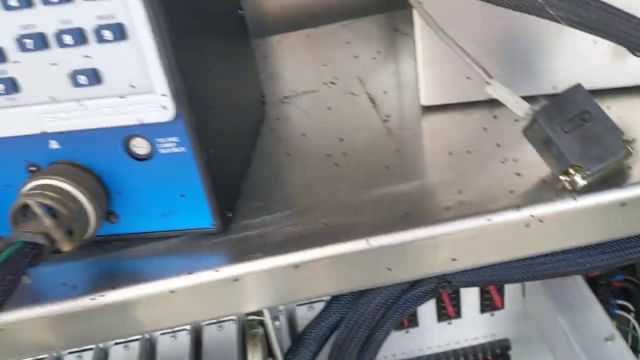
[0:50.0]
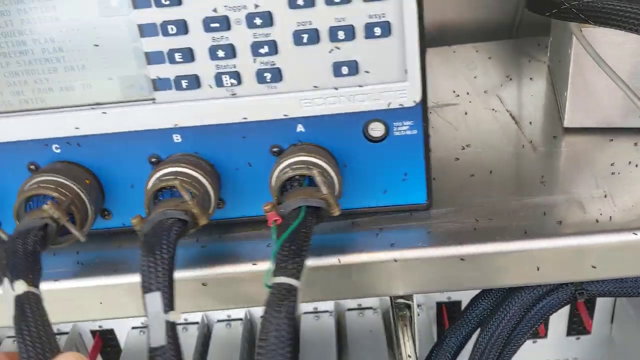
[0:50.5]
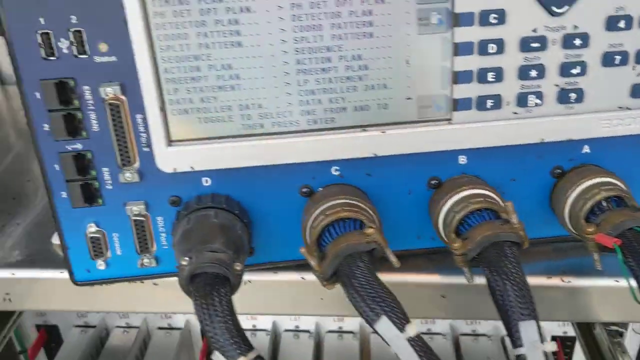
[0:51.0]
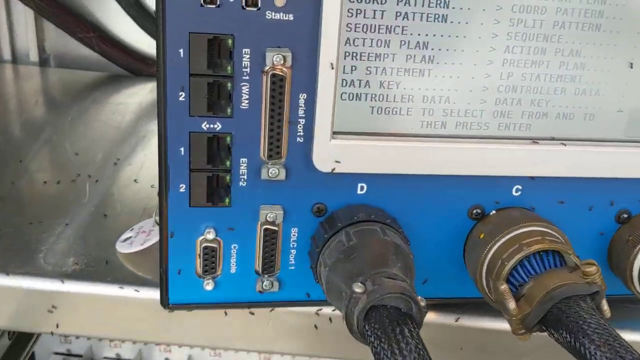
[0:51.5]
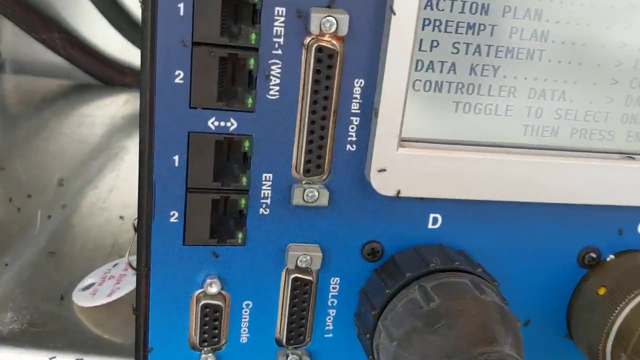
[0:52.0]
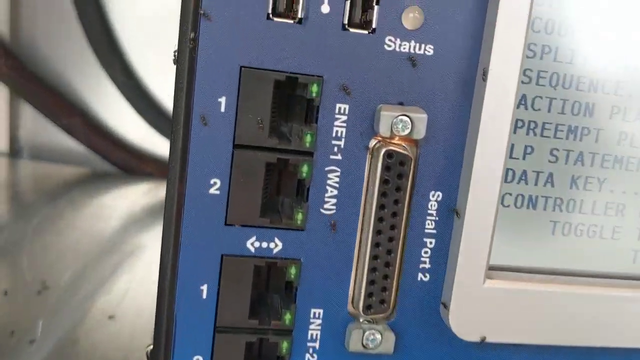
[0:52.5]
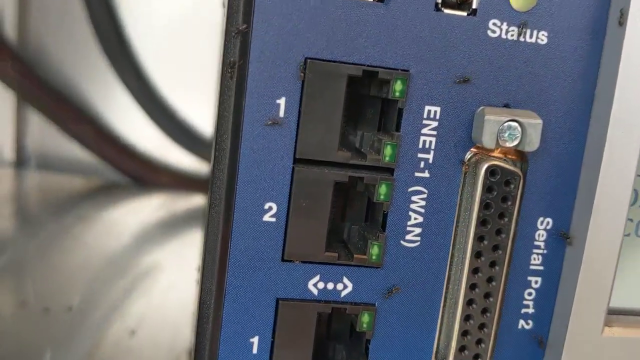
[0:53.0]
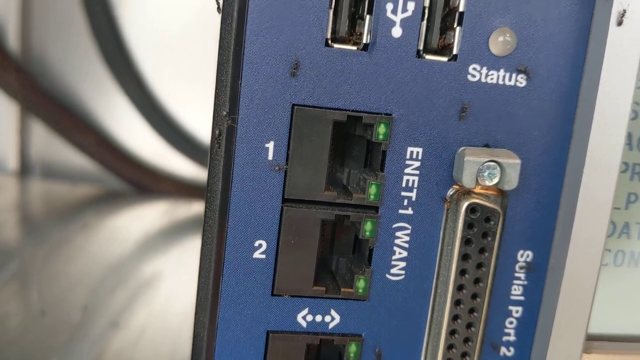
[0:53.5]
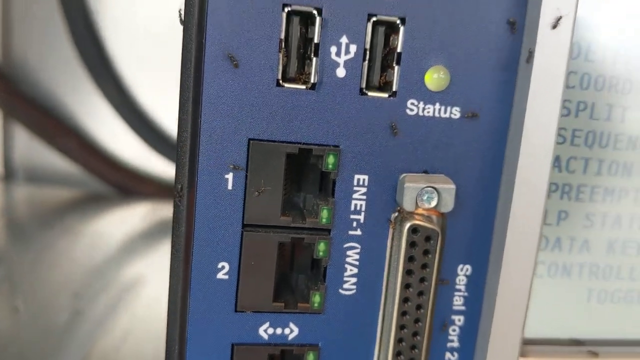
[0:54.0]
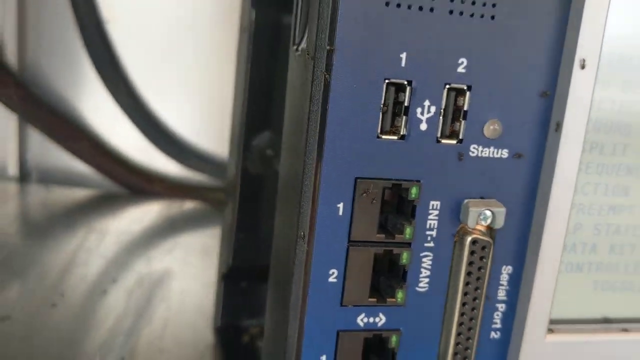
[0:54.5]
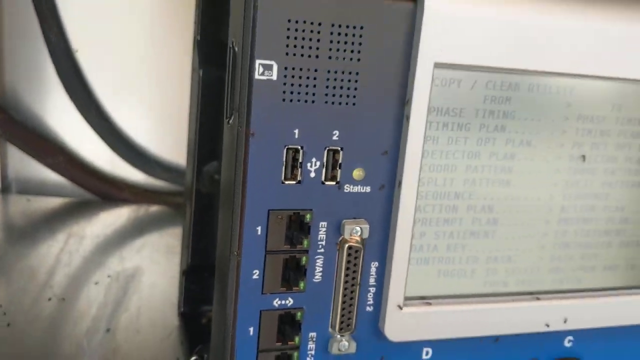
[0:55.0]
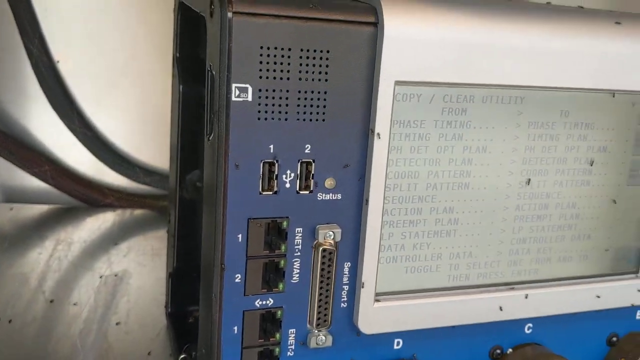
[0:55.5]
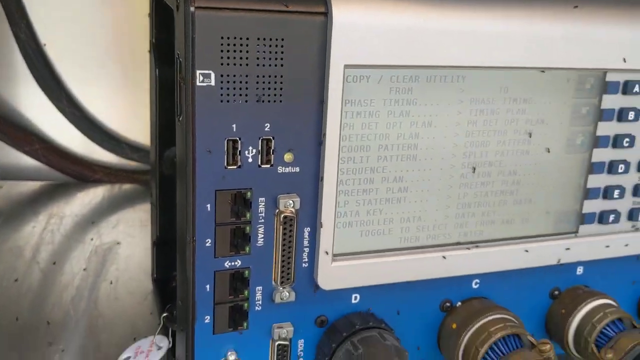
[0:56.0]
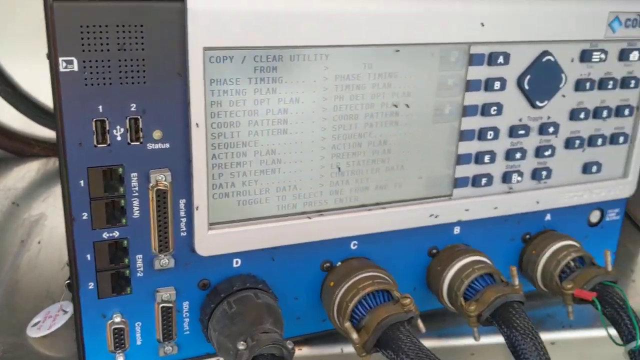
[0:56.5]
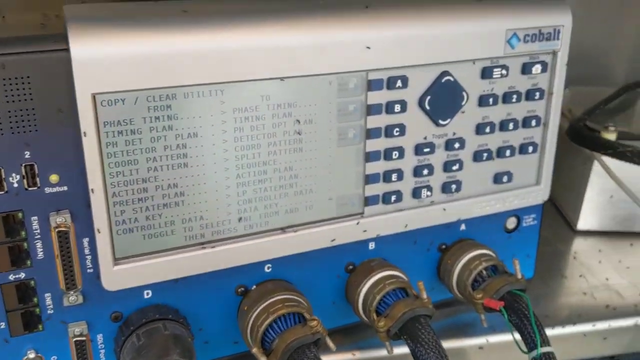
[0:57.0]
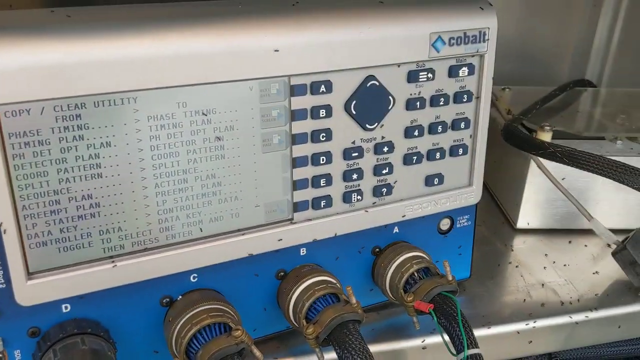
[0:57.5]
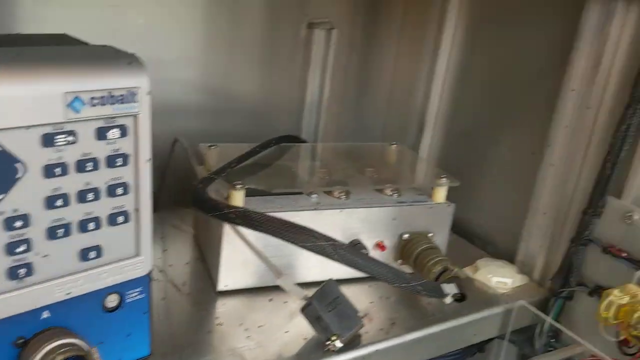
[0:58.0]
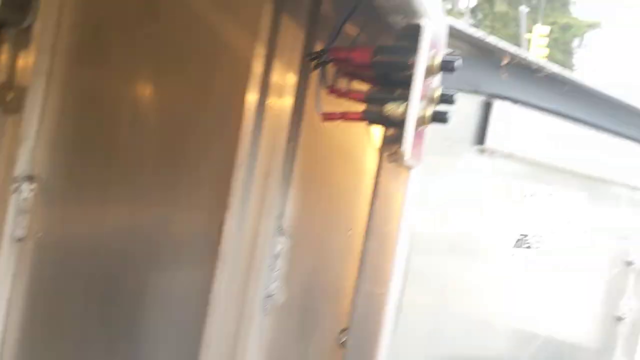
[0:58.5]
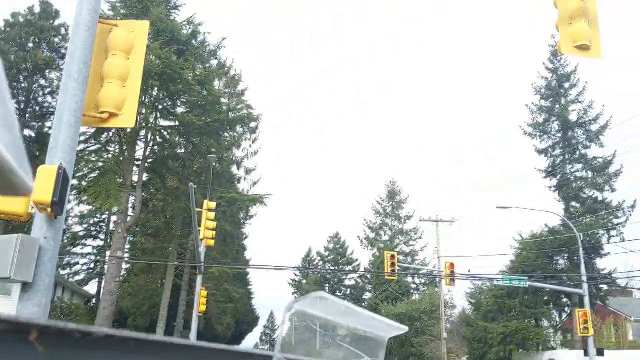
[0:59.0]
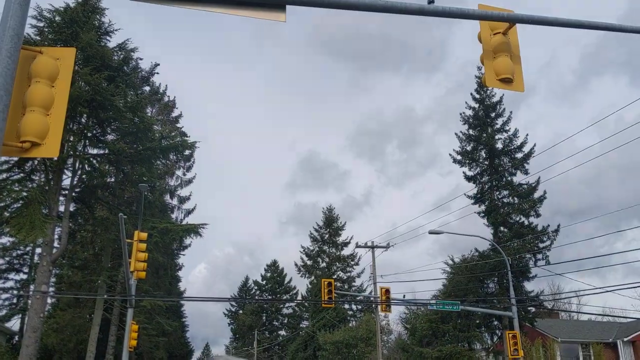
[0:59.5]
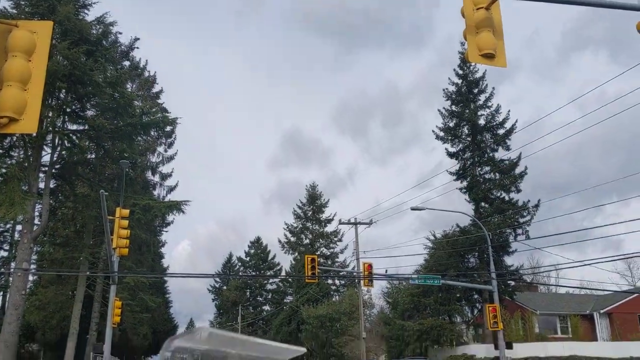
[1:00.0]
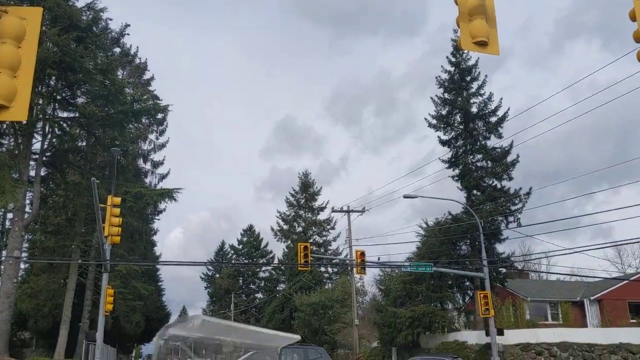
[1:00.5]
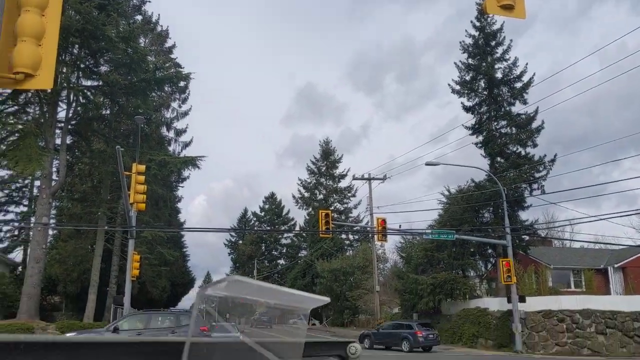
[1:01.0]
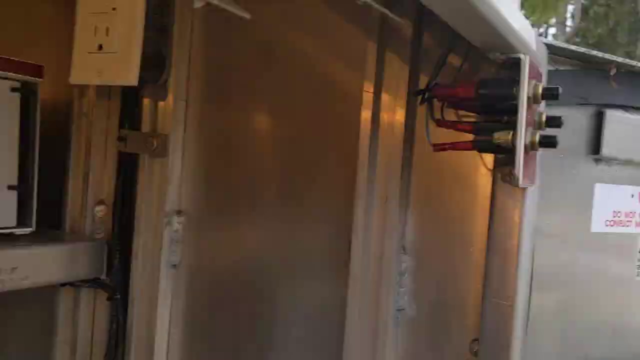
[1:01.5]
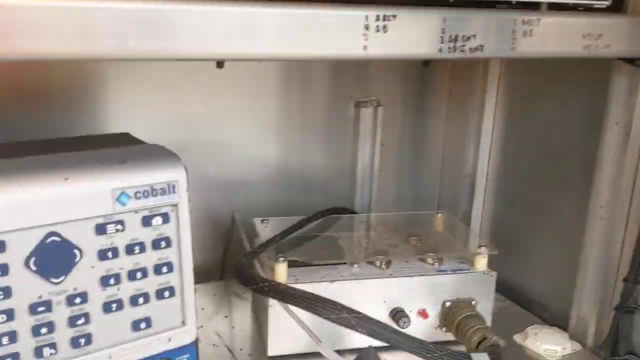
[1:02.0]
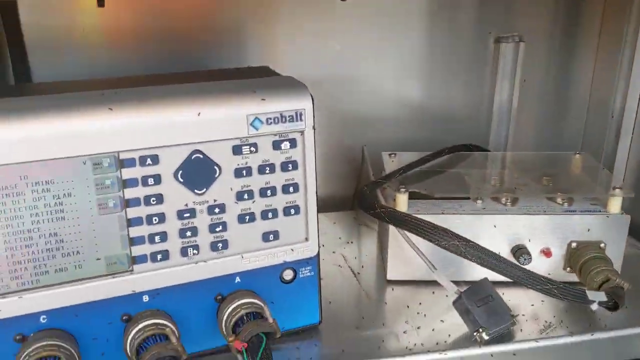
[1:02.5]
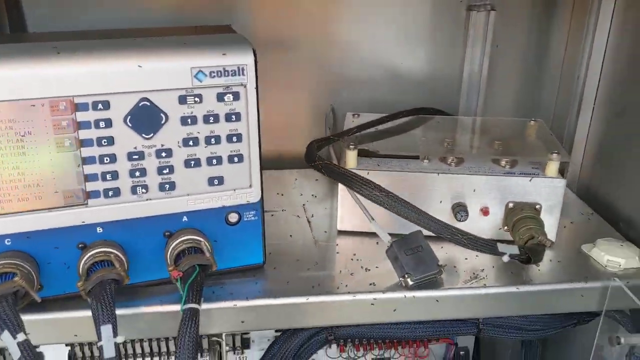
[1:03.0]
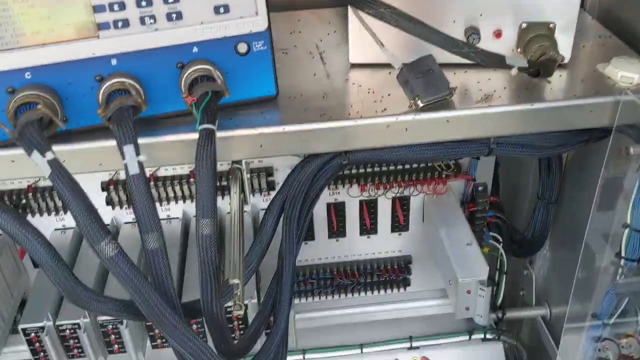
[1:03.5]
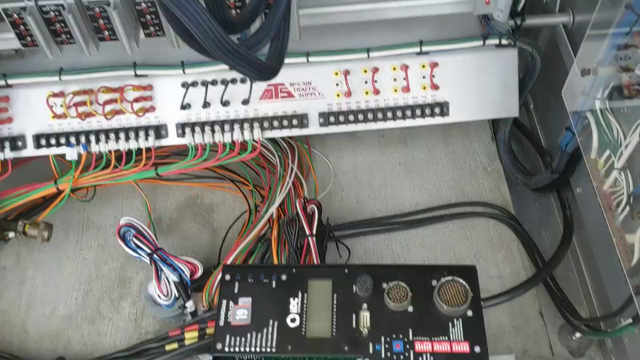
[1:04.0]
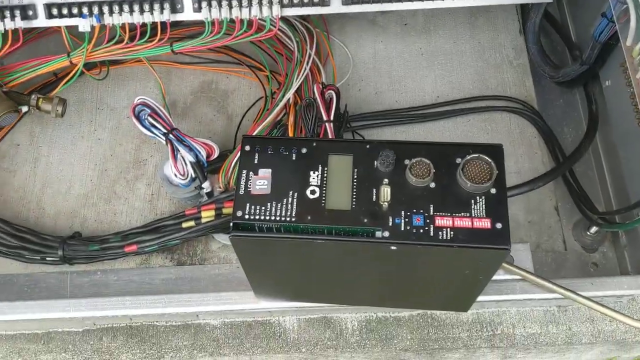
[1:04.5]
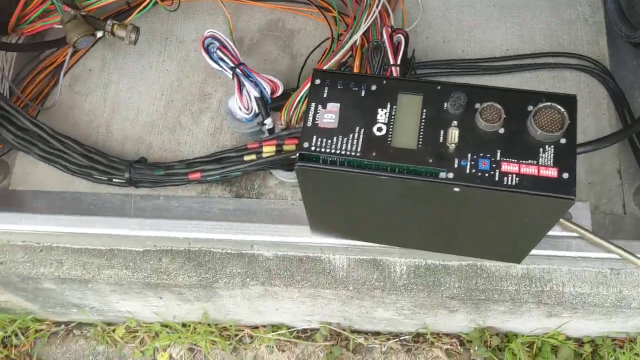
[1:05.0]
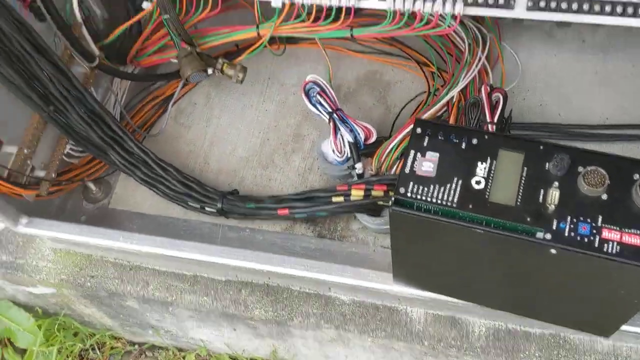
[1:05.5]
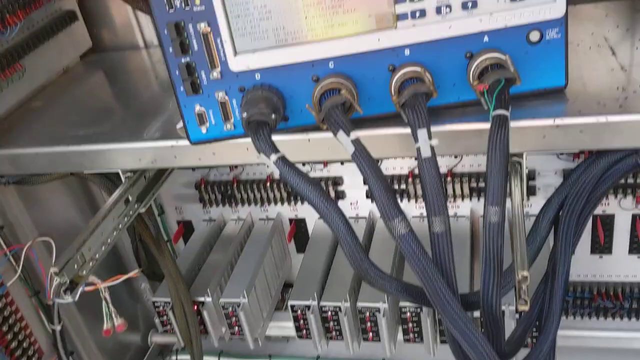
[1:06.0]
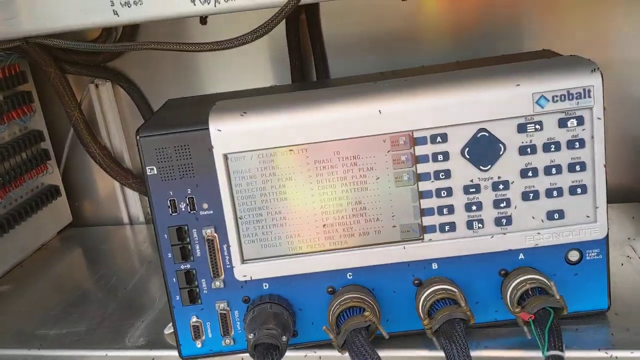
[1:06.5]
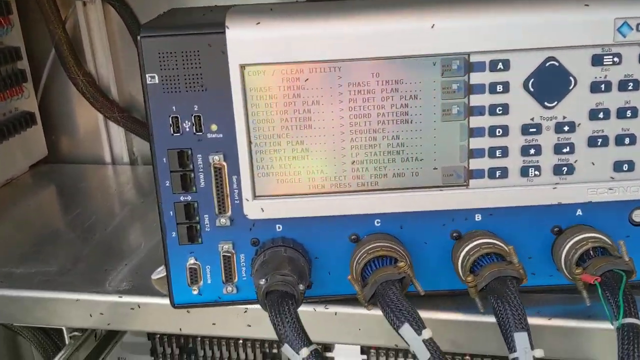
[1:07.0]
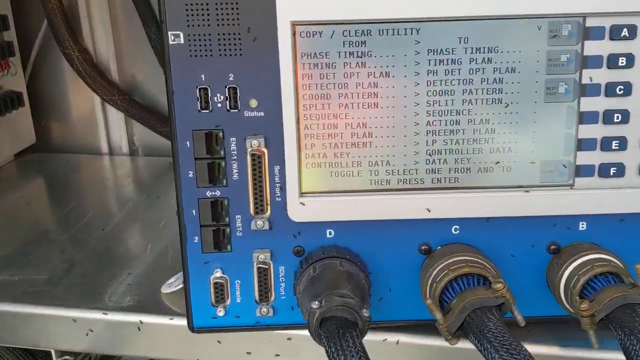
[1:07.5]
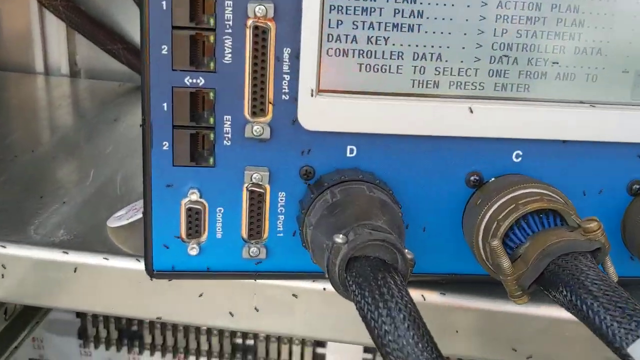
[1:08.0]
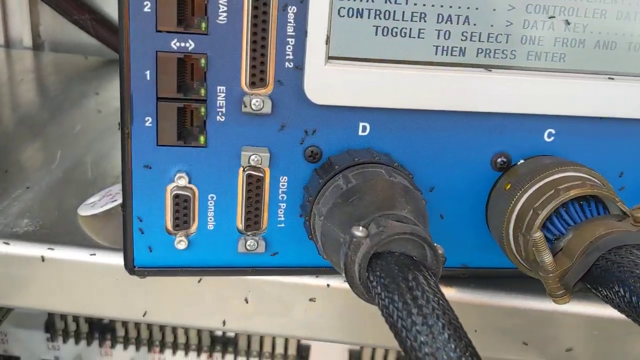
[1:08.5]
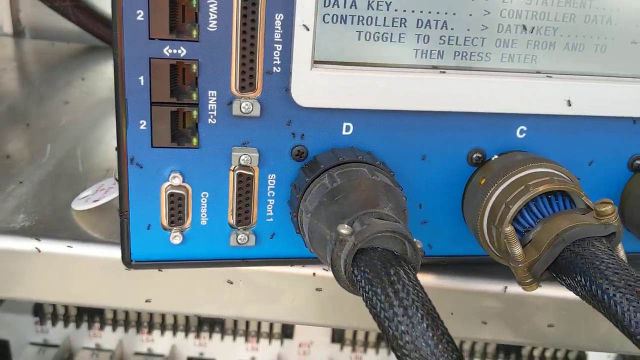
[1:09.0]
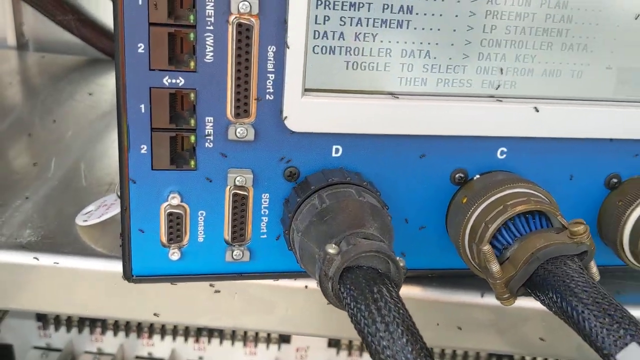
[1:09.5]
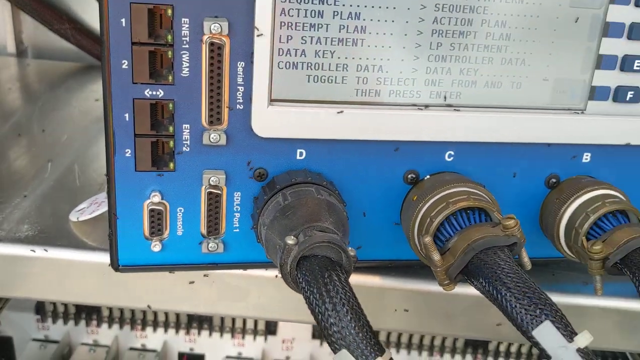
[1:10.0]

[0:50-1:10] The machine is still shown with black ants everywhere, now entering the machine's sockets. The camera then pans away from the machine to the outside, showing yellow traffic lights, green trees, a gray sky, and a building on the adjacent side. The camera pans back to the machine and the ants and shows the bottom of the table, where there is another black machine with some visible sockets; it appears to be attached to the blue machine.